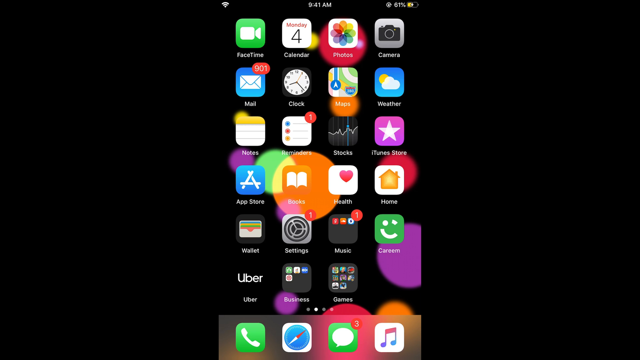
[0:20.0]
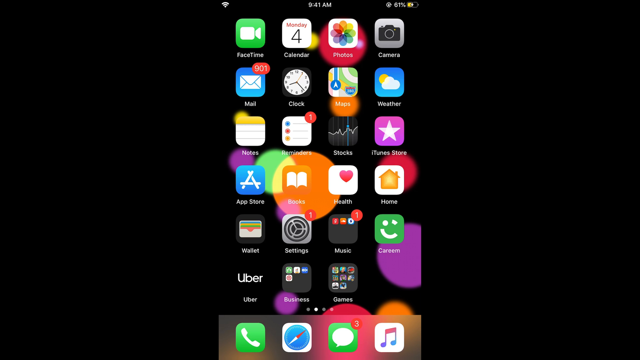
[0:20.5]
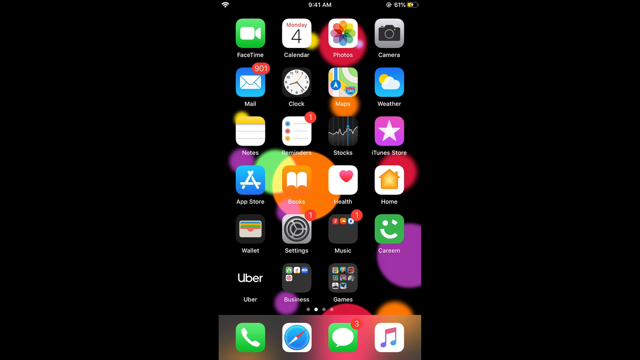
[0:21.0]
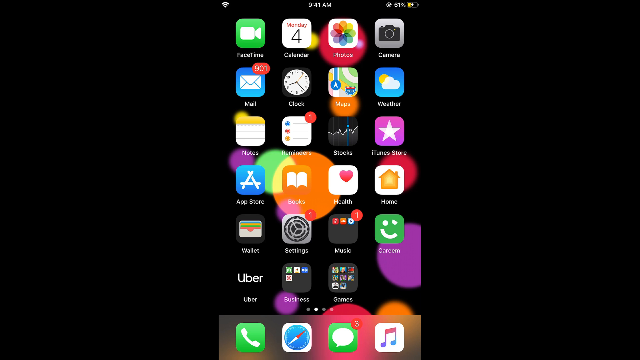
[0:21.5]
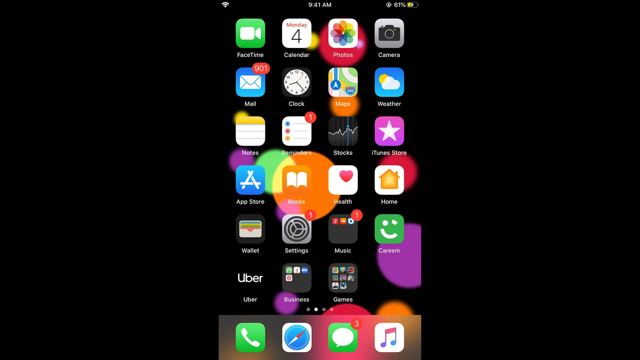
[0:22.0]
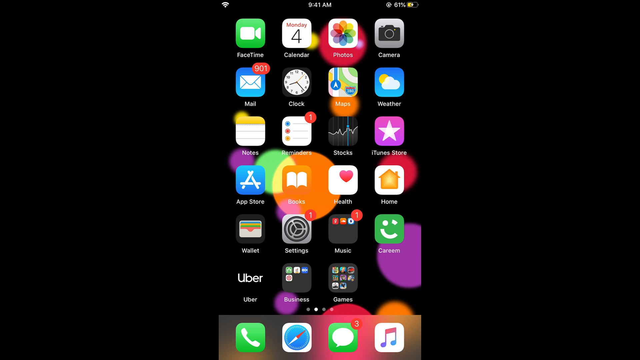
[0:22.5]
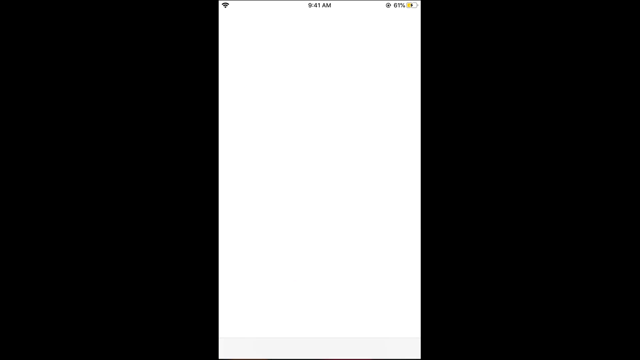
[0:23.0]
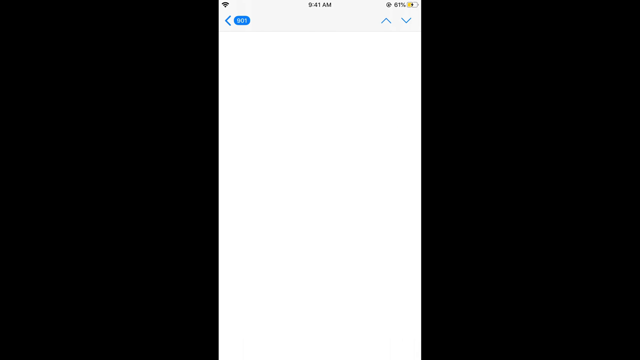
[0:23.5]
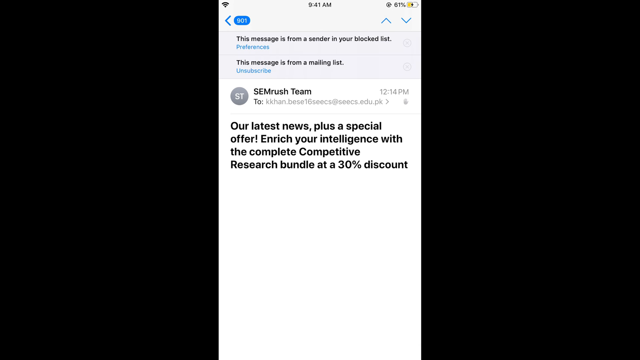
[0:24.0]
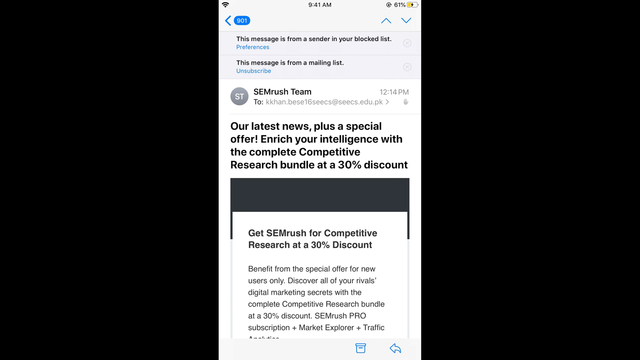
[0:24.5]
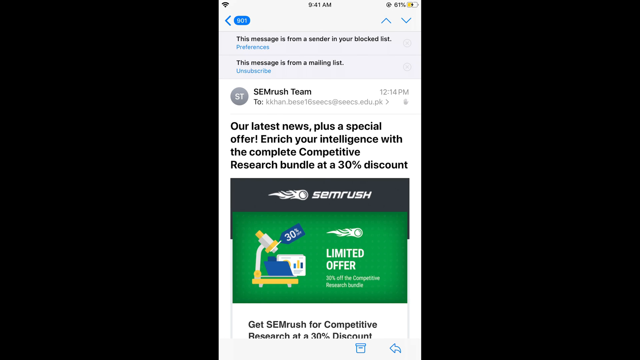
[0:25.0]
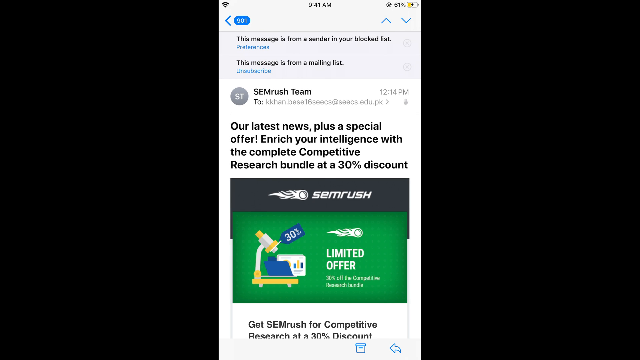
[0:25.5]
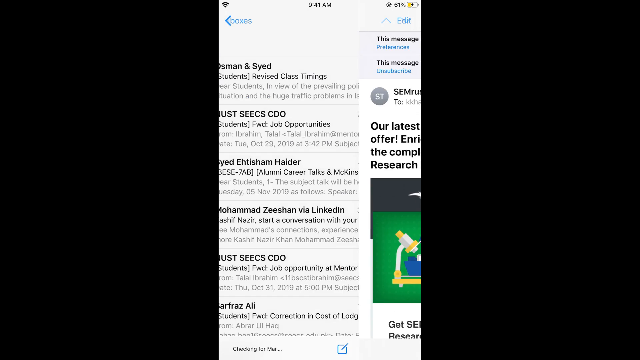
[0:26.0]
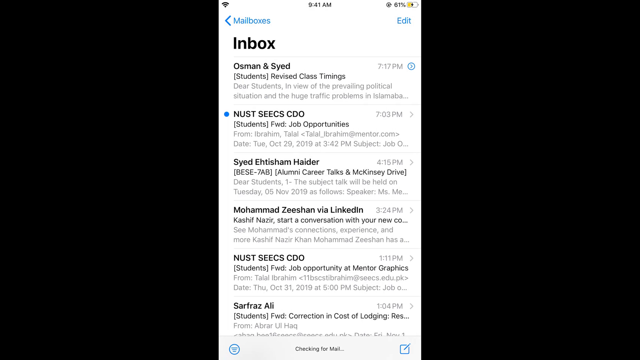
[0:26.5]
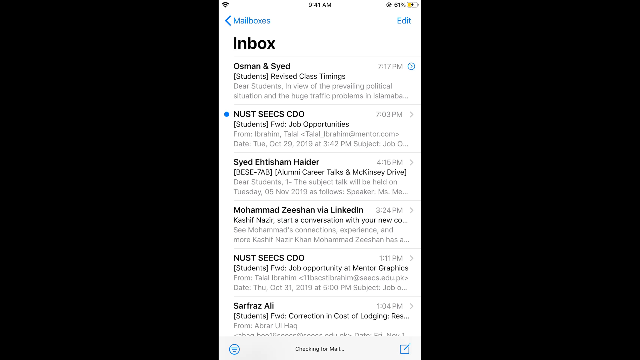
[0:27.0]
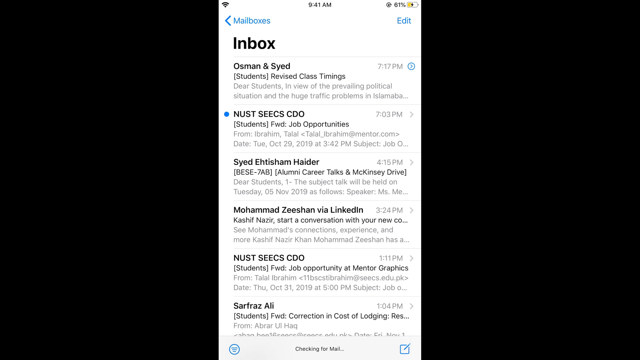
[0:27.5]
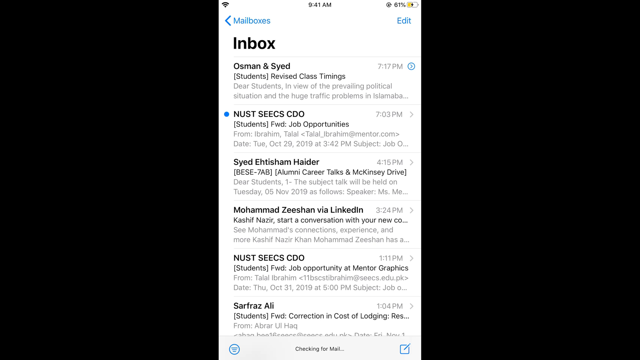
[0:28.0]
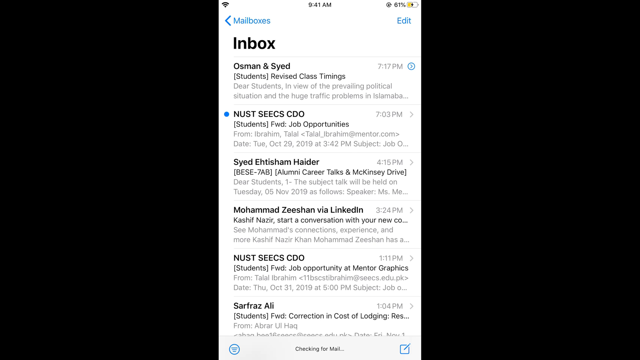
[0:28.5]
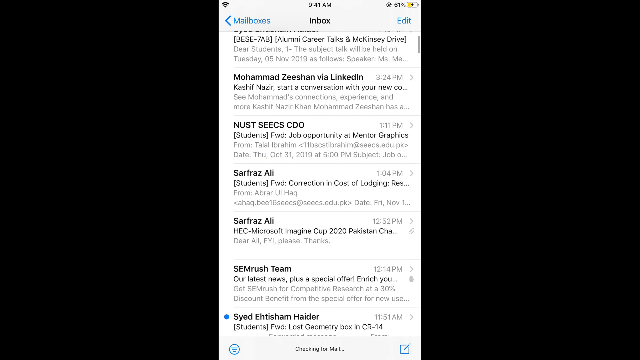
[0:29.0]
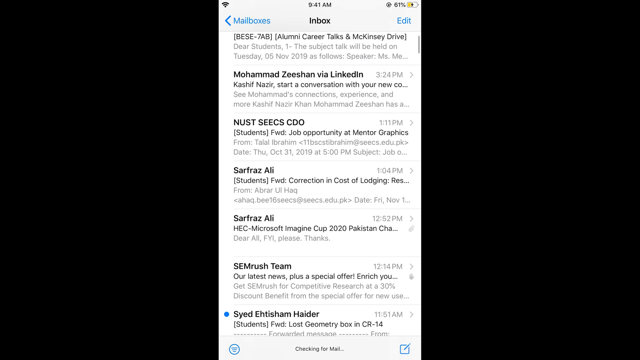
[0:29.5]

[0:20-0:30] An iPhone screen shows FaceTime, Calendar, Photos, Camera, Weather, Maps, Clock, the App Store, Uber, Wallet, Settings, Music, Current, Games and Business. Another screen follows with Mail opened, showing the inbox. There are messages that seem to be from Sam Rush, a message that reads "this message is from a sender in your blocked list", and another that says "this message is from a mailing list" with an option to unsubscribe. The inbox is then shown with emails from different people at different email addresses.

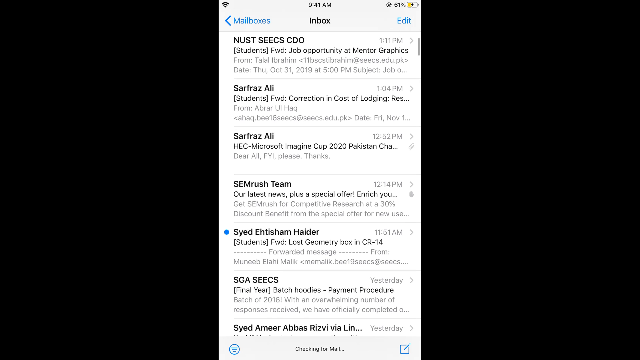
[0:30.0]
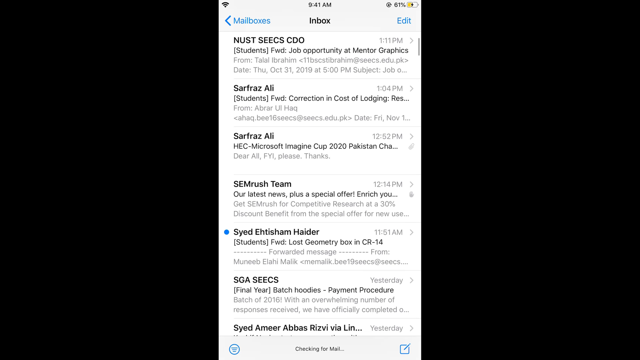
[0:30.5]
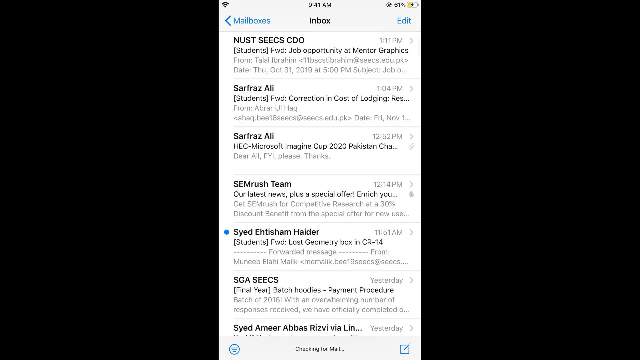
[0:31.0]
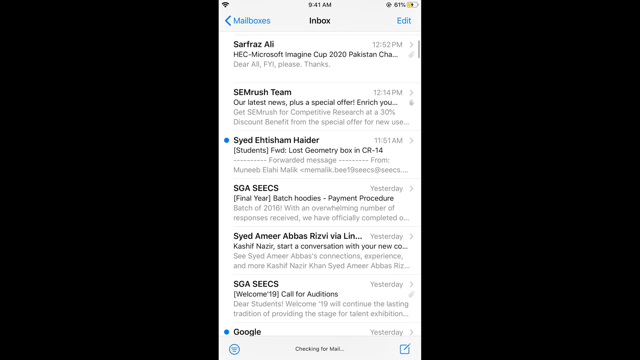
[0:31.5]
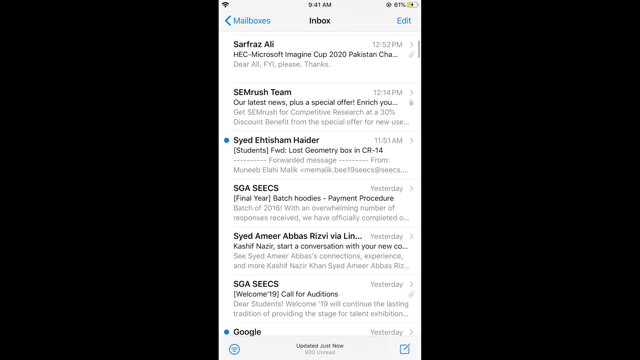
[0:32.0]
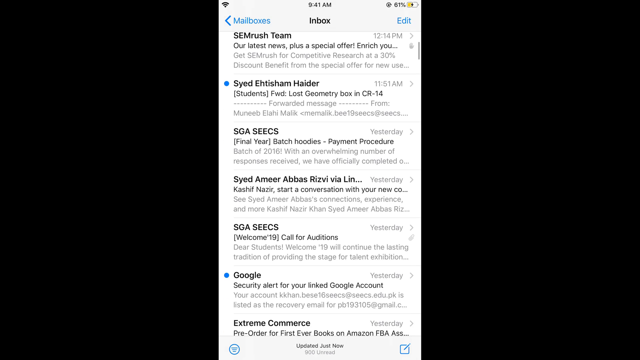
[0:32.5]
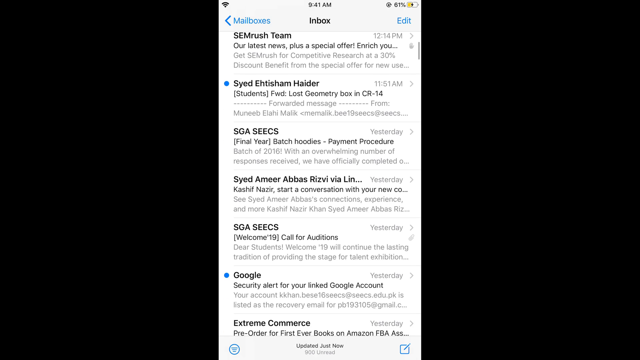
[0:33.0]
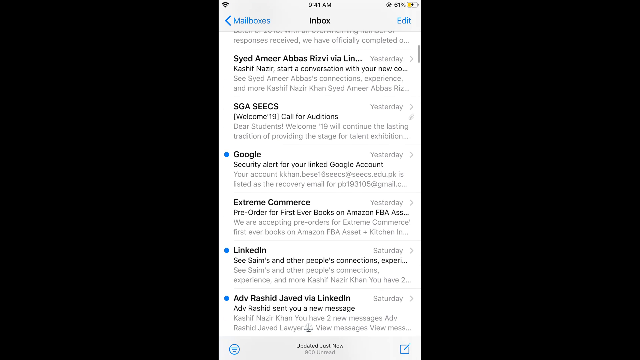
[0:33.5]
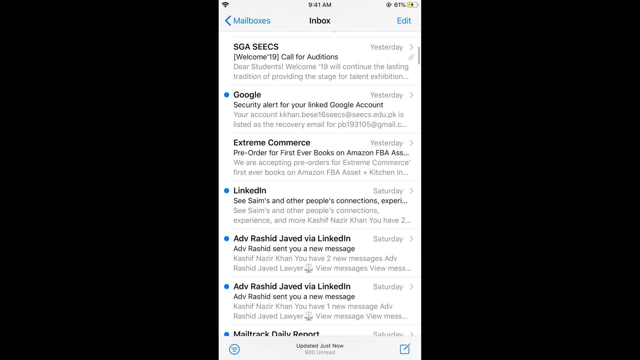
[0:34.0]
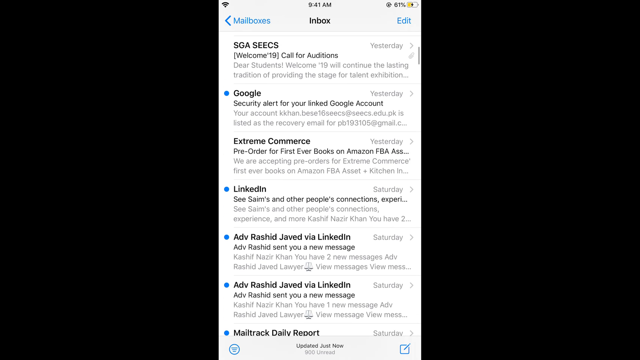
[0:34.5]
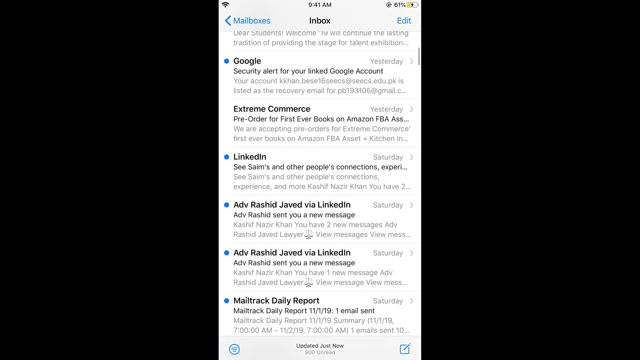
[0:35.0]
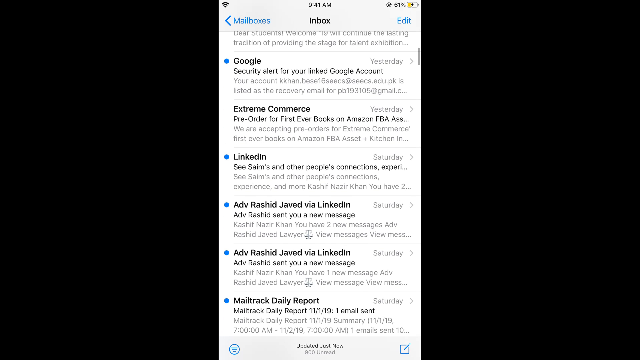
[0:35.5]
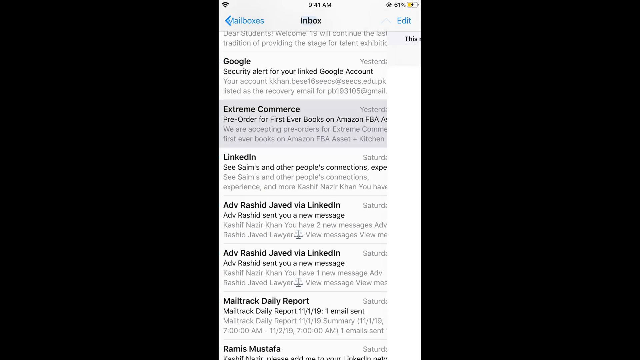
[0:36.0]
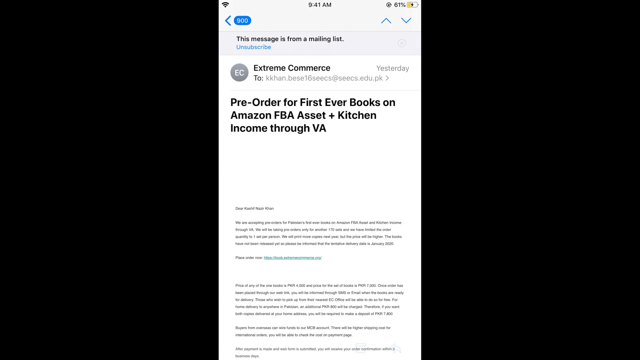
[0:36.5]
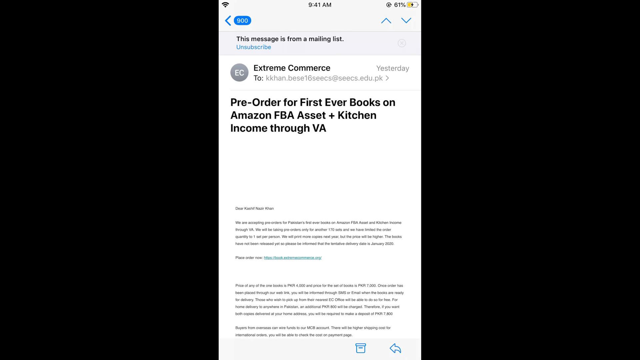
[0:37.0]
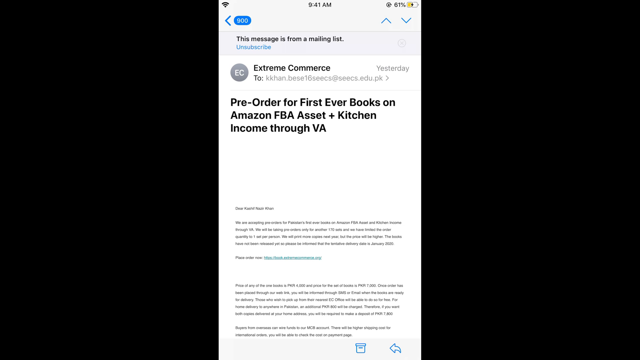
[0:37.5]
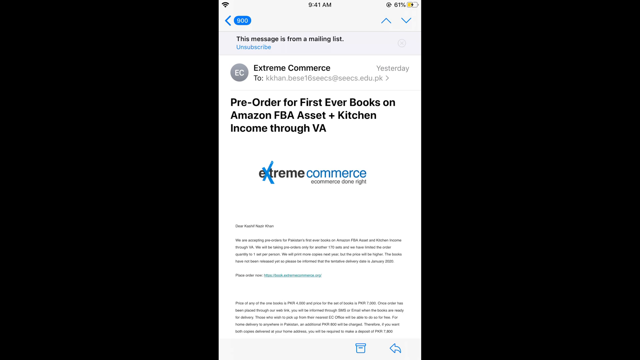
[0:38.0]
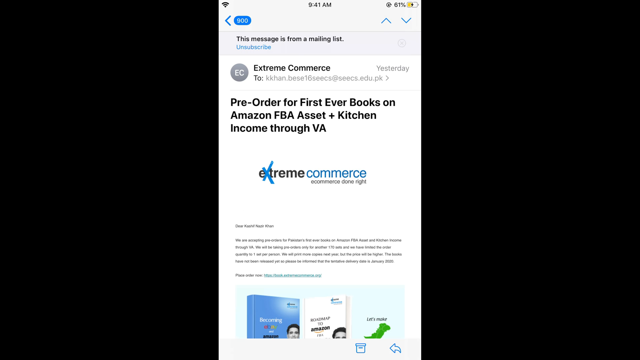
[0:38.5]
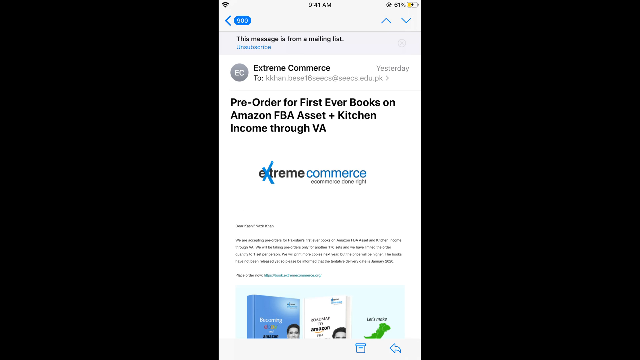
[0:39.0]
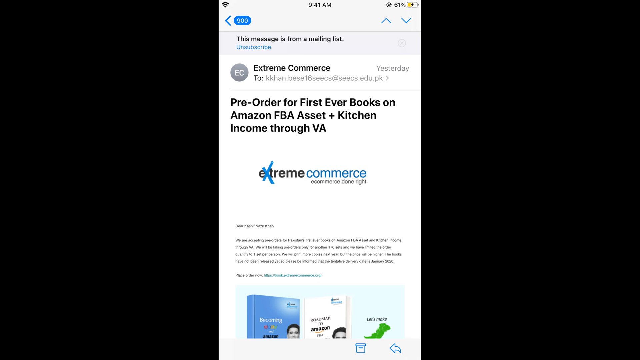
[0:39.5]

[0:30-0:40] An inbox screen says "mailboxes" and lists emails from NASTS 6 CDO, which is for students, as well as emails from Safraz Ali, Semraj Tim and Syed Haider. The page scrolls down through more emails: one from Kuku with a blue dot to its left, one from LinkedIn with a blue dot to its left, another from Advocate Rashid Jeffed via LinkedIn with a blue dot on the left, and a Meltrick Daily Report, also with a blue dot on the left. Some of these messages seem to have been sent on Saturdays, while the others seem to say yesterday. An email from Extreme Commerce is opened, reading "pre-order for first ever books on Amazon FBA", and then the Extreme Commerce logo is shown.